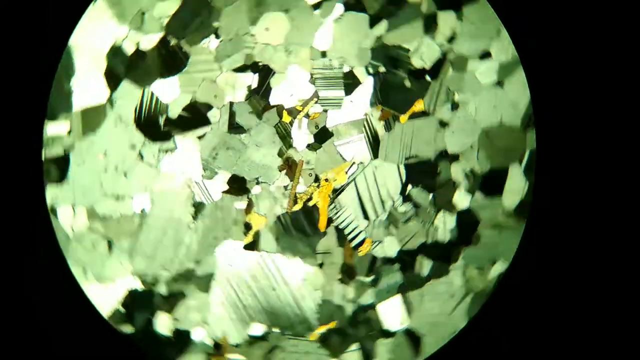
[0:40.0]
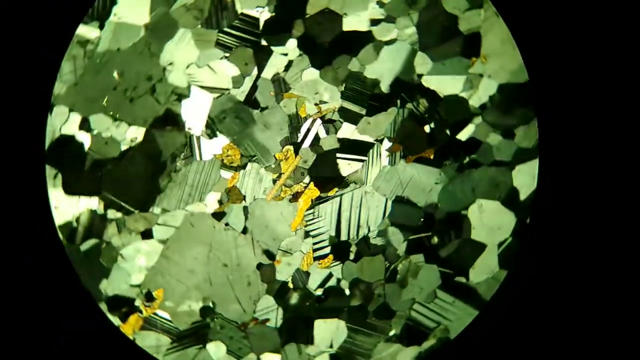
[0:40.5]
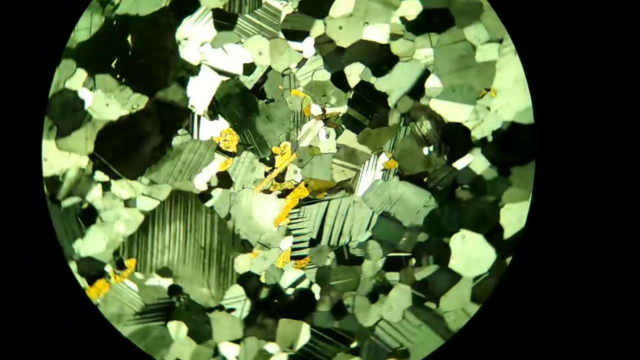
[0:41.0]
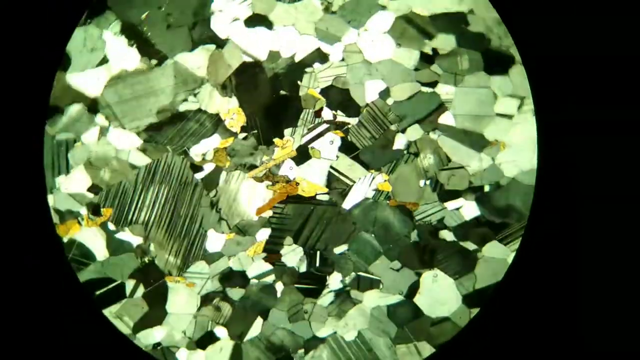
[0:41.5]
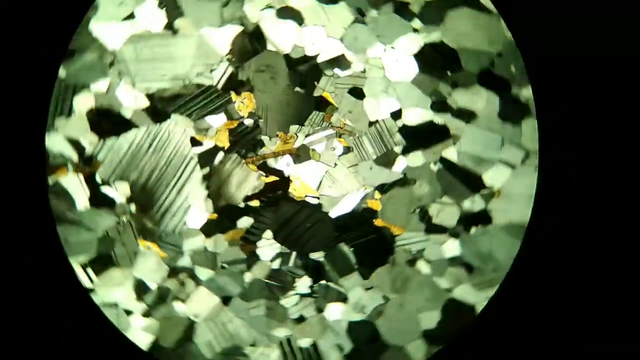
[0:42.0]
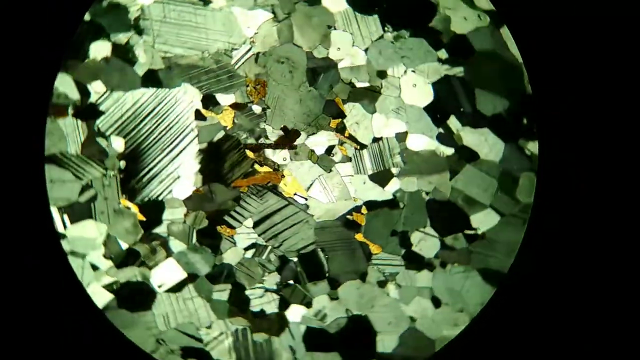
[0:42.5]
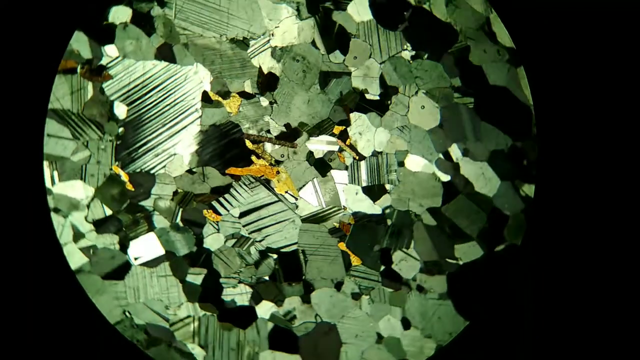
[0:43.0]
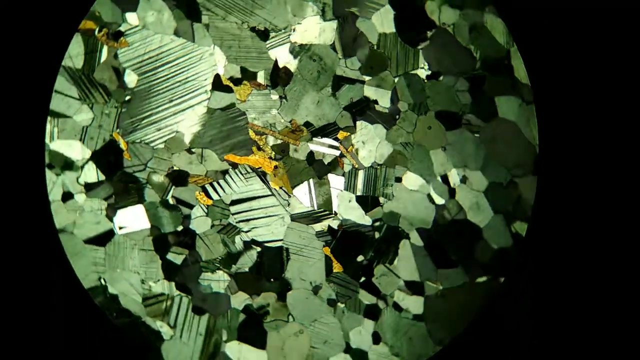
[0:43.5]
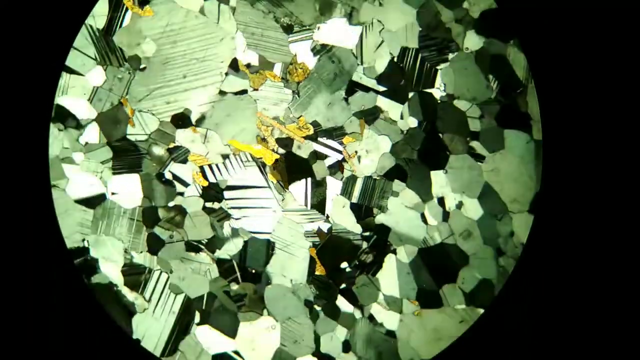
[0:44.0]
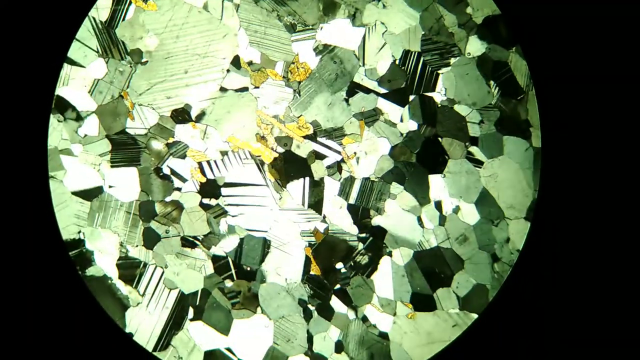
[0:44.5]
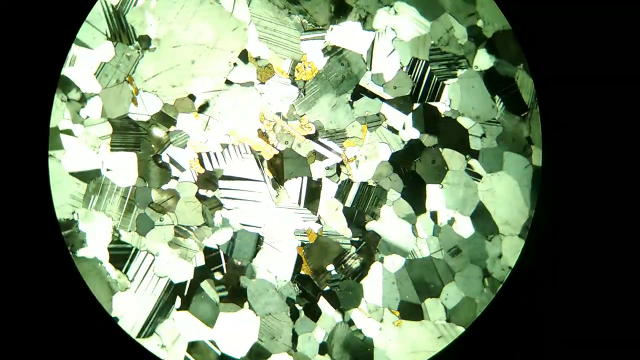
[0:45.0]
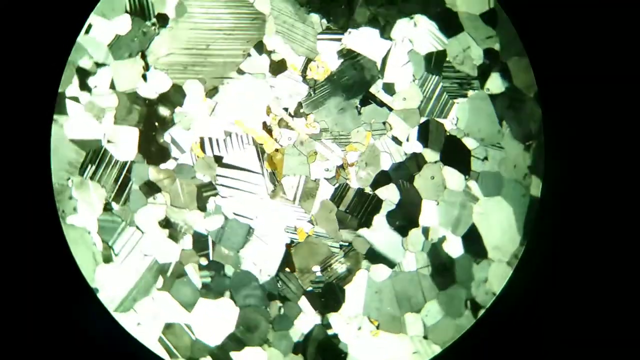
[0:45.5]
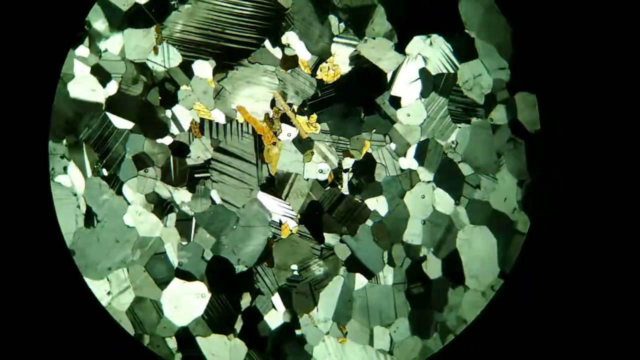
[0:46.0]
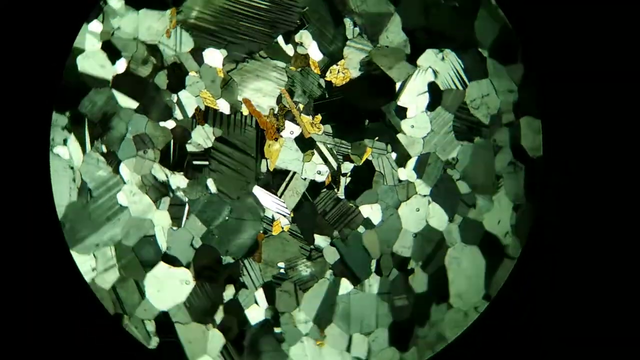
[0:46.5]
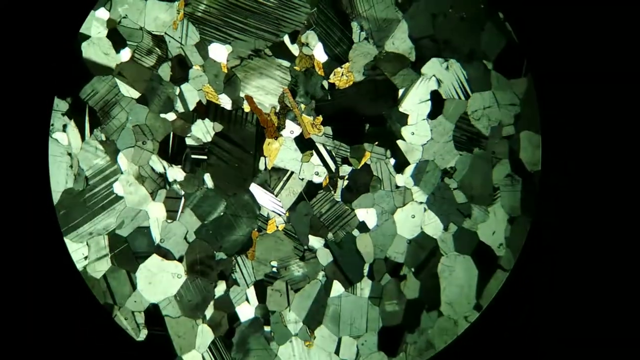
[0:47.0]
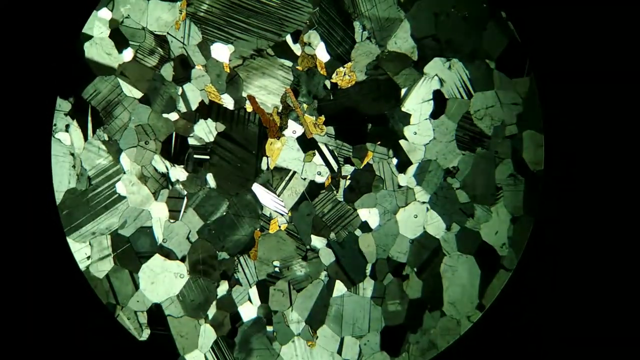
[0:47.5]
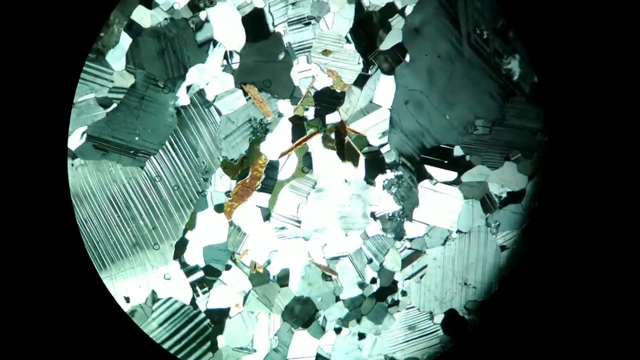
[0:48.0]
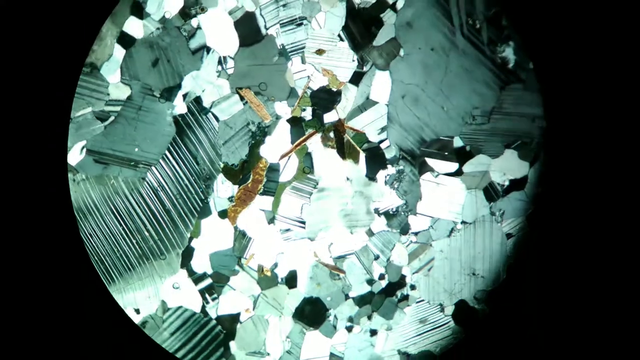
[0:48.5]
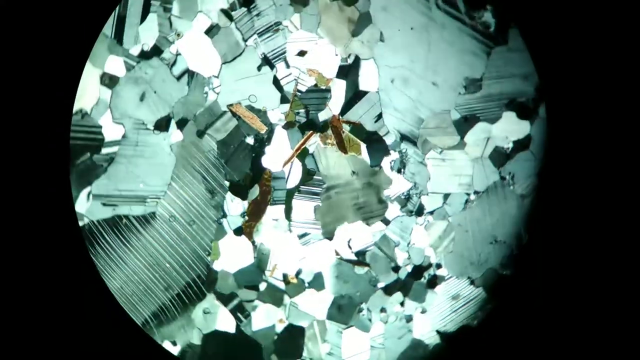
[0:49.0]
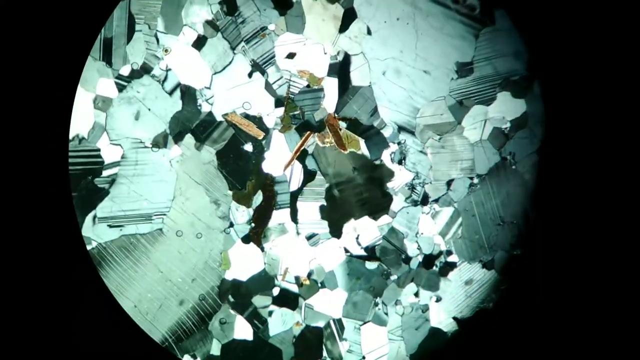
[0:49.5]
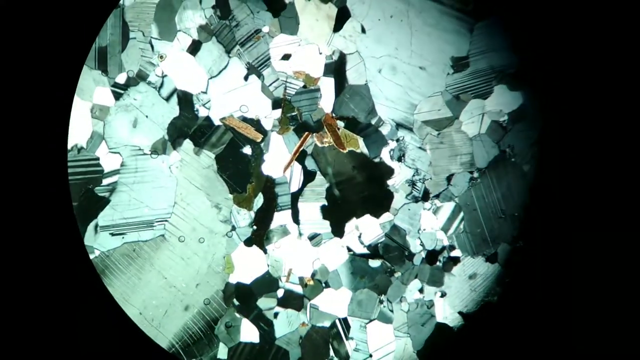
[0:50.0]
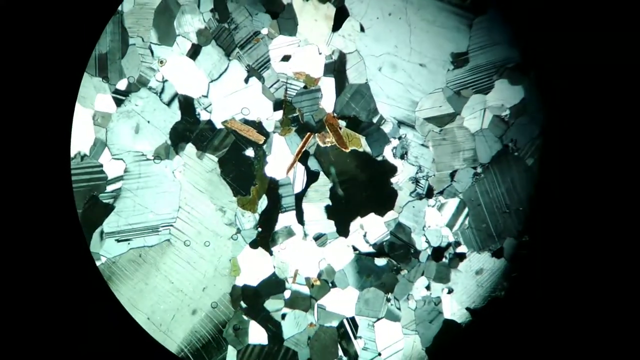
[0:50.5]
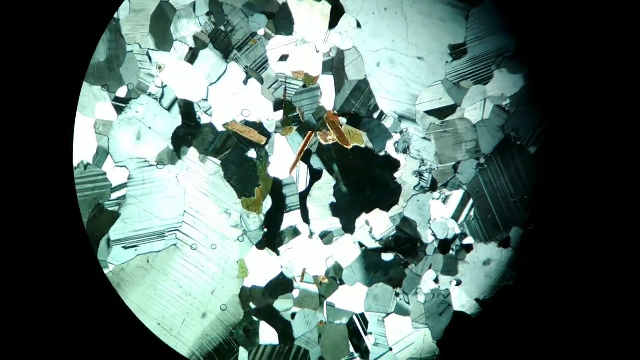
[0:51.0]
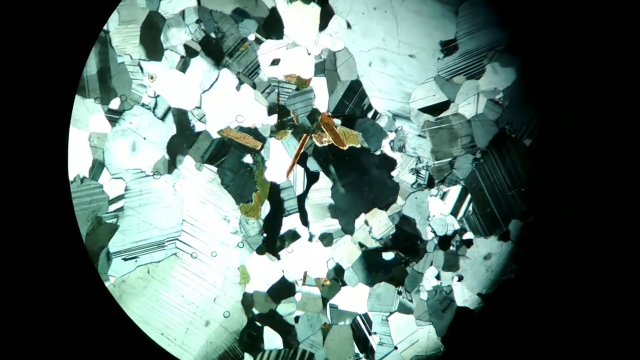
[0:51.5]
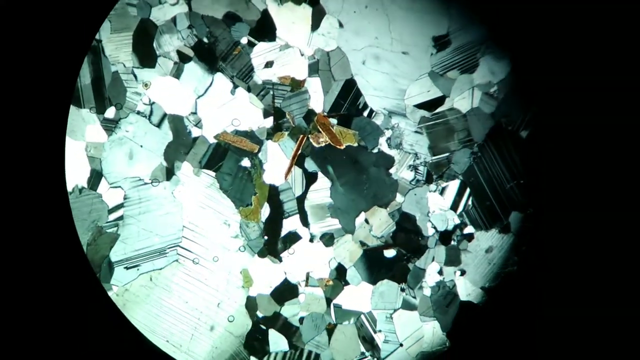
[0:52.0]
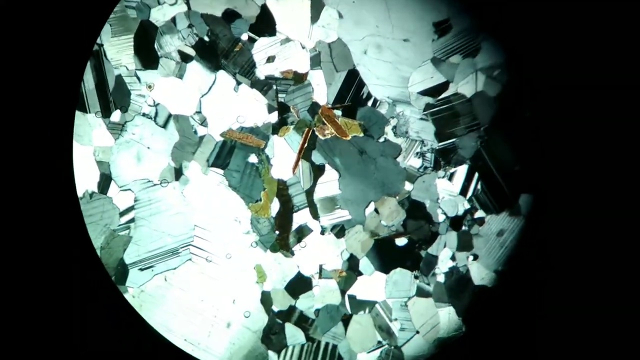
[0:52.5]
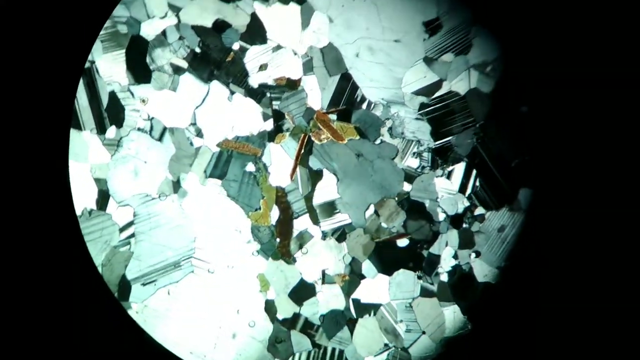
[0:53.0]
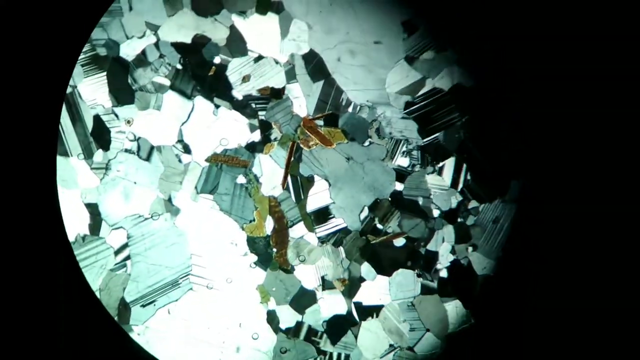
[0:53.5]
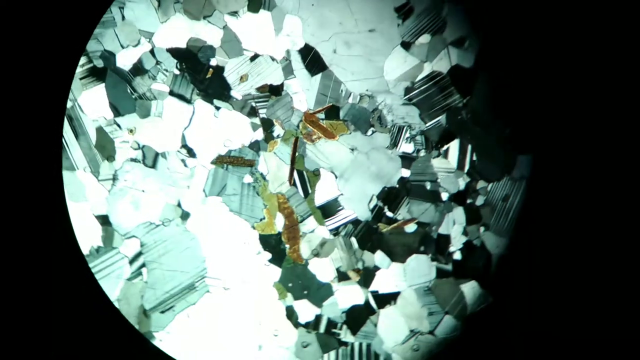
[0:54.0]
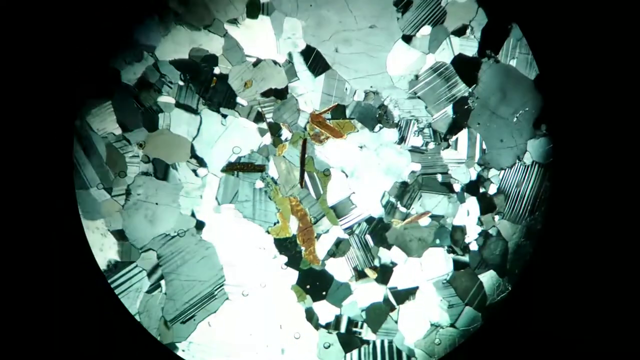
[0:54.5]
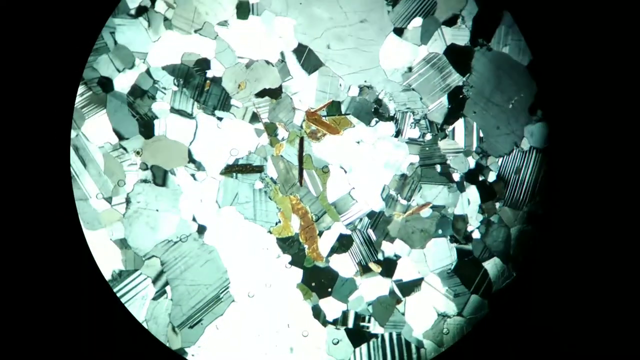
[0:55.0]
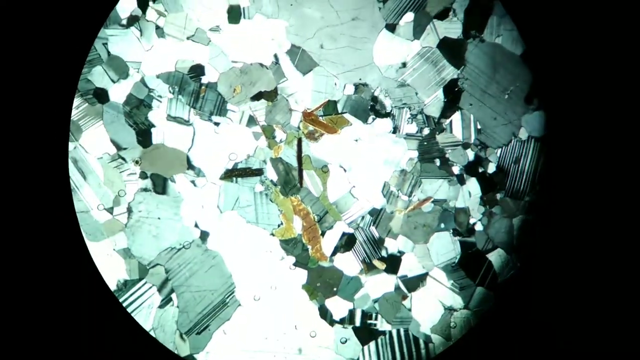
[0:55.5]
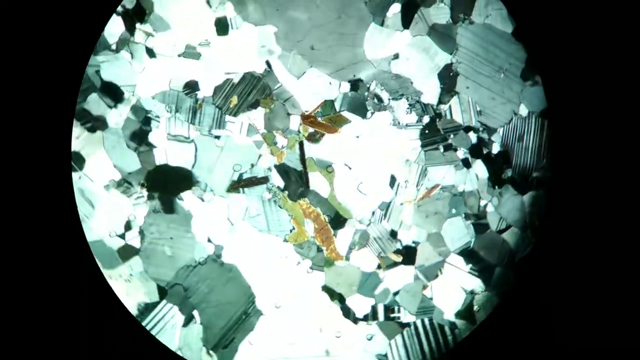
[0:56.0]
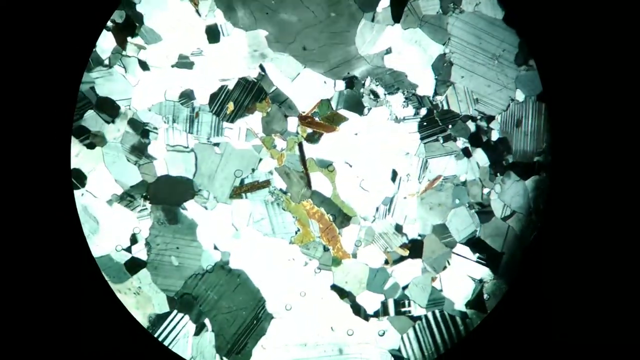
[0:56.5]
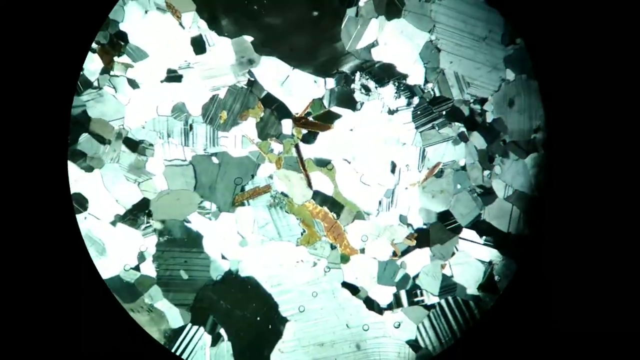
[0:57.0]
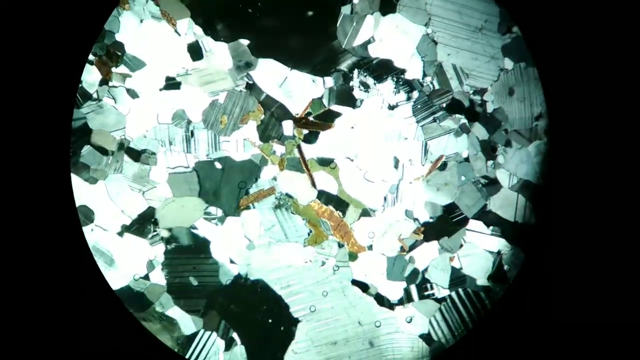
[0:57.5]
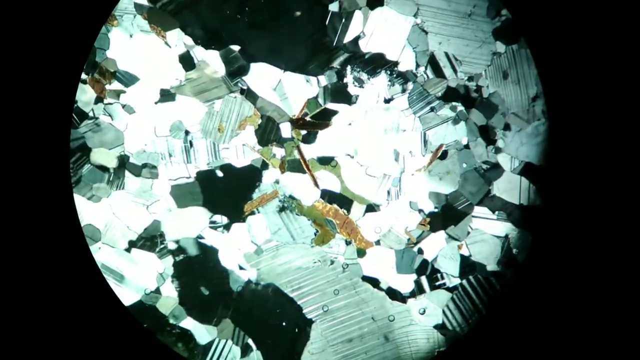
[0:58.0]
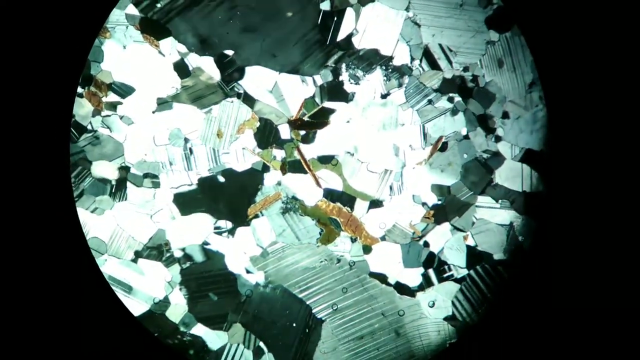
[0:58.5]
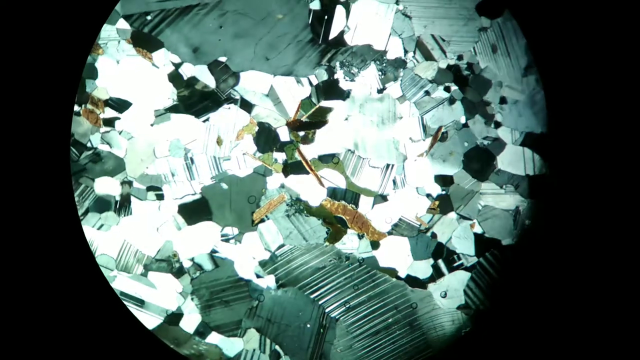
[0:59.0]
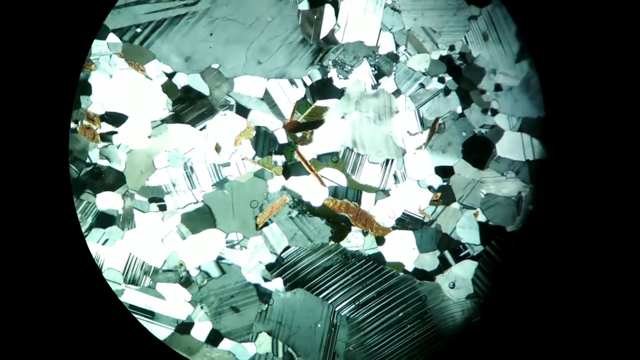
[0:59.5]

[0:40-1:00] The microscope's magnification switches back to an extremely high magnification, looking in on what seems to be a piece of stone, possibly a gemstone. Parts of it look translucent. The material is mainly green in all shades from dark to light, with yellow in just a very few spots and what looks like a little bit of brown. The high magnification shows all of its imperfections.